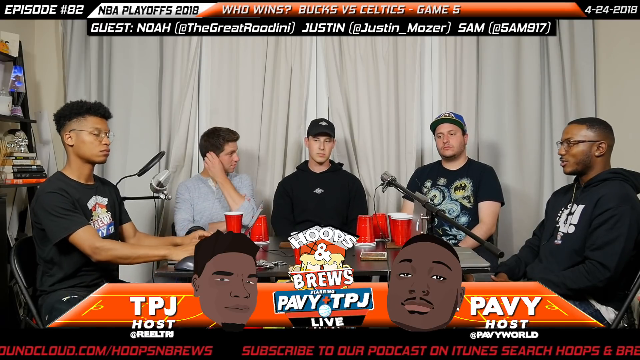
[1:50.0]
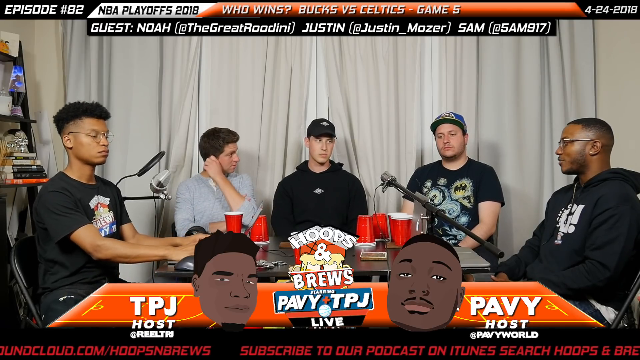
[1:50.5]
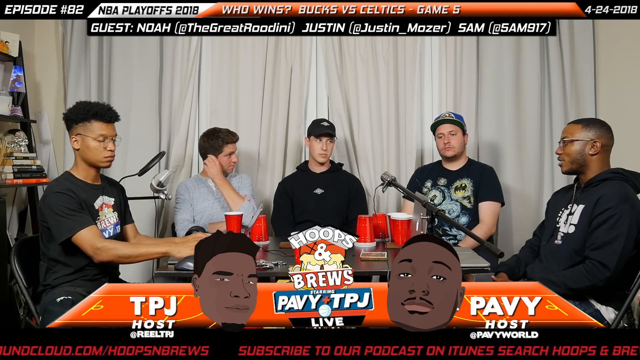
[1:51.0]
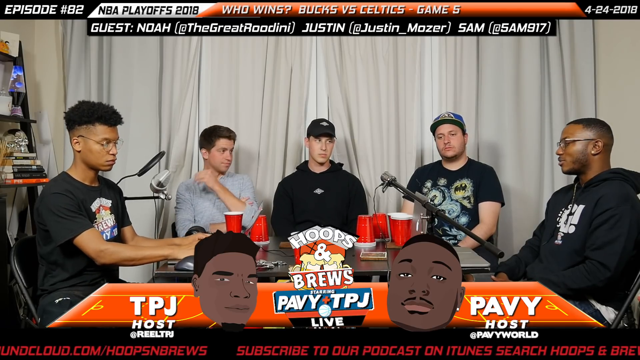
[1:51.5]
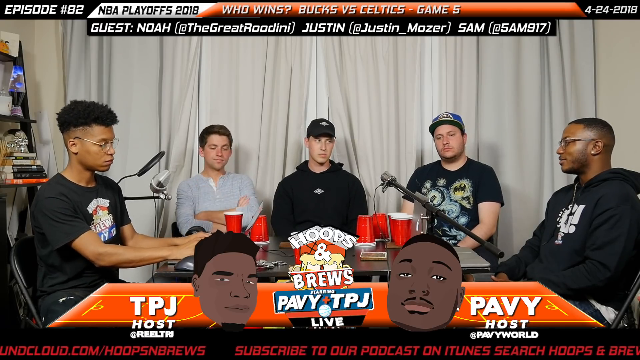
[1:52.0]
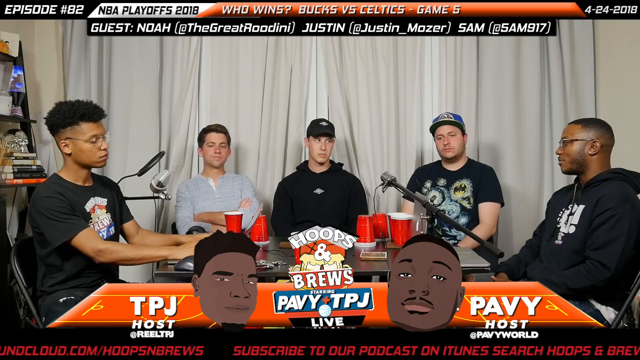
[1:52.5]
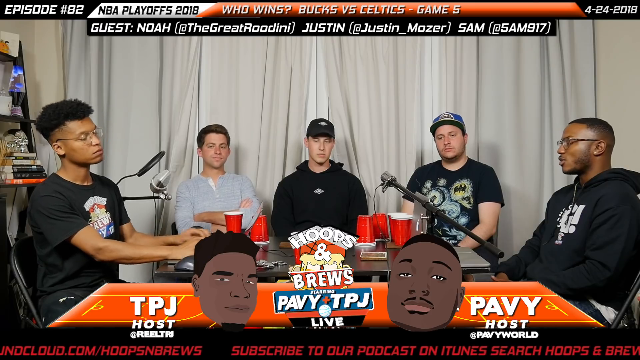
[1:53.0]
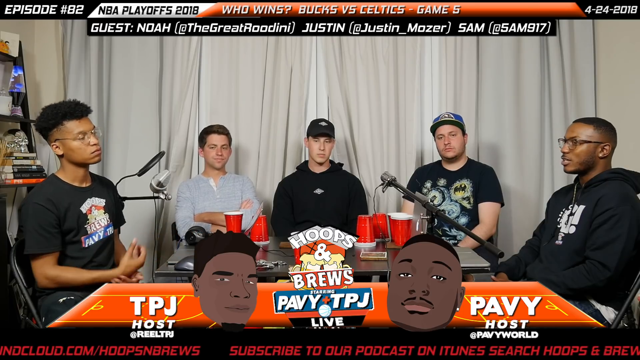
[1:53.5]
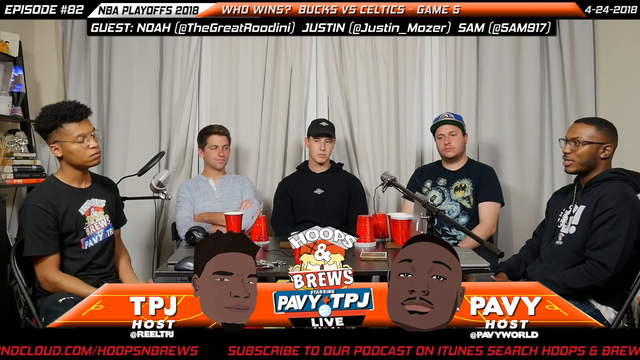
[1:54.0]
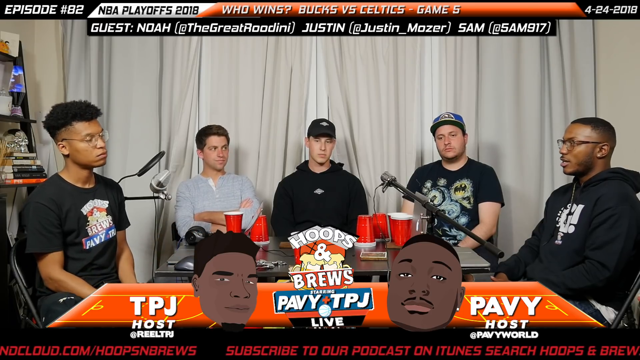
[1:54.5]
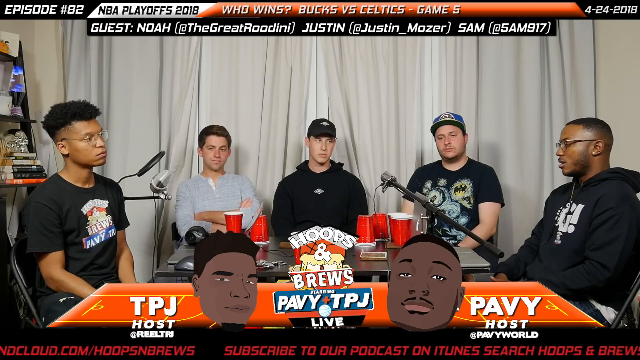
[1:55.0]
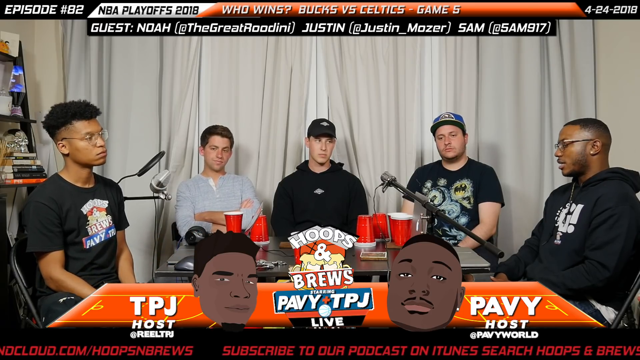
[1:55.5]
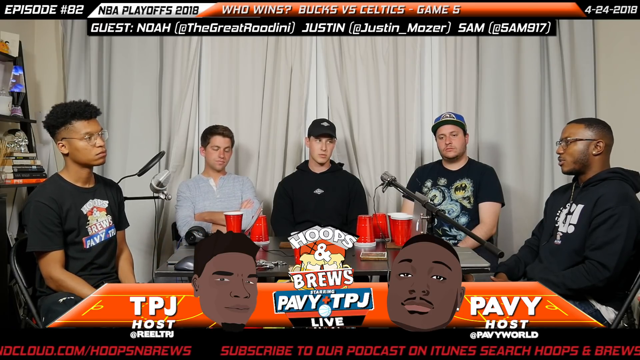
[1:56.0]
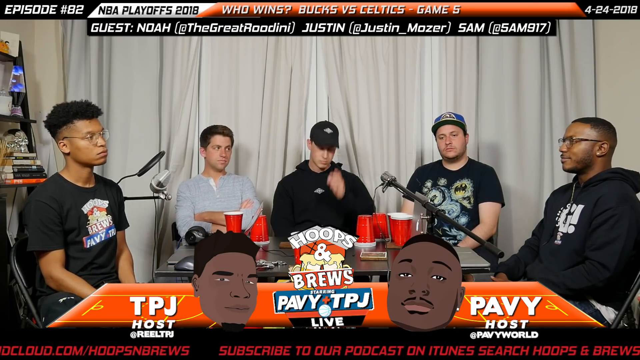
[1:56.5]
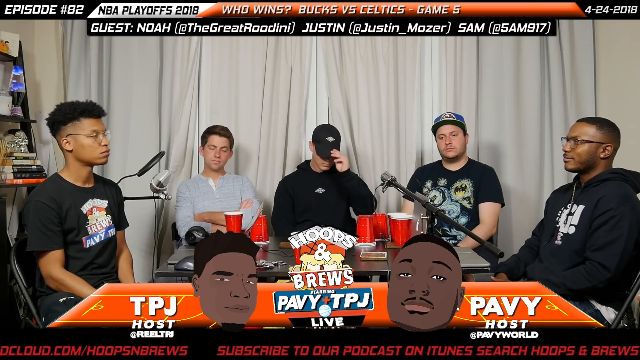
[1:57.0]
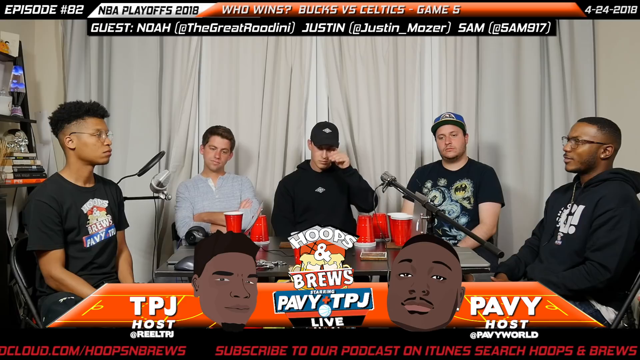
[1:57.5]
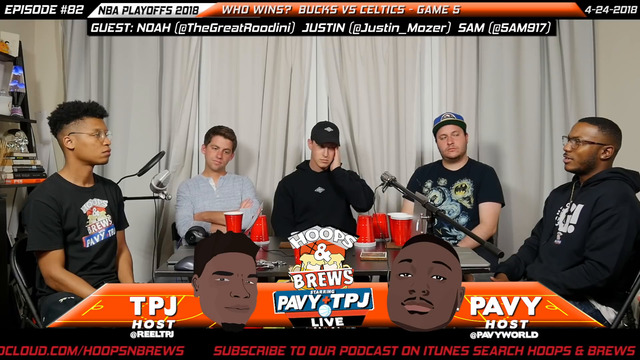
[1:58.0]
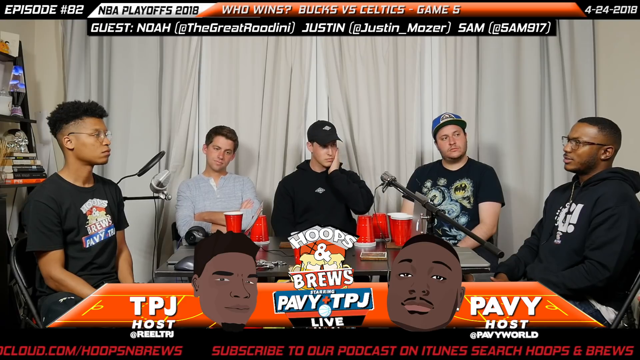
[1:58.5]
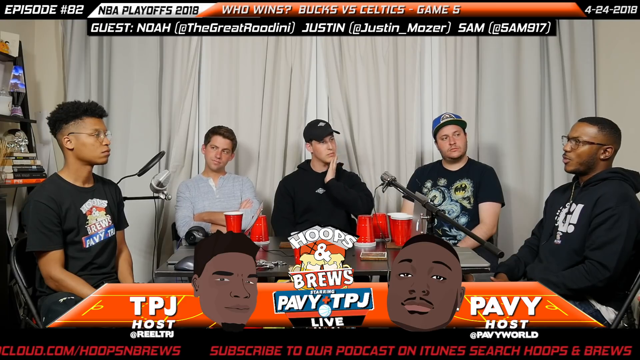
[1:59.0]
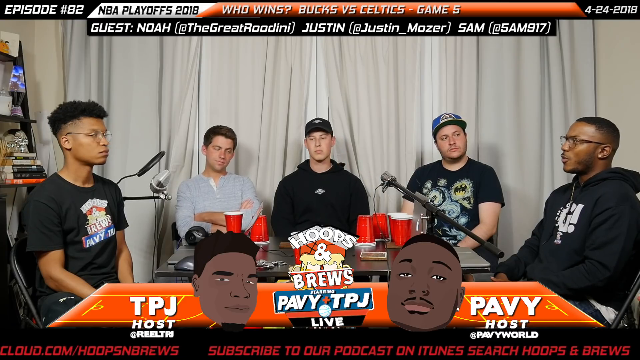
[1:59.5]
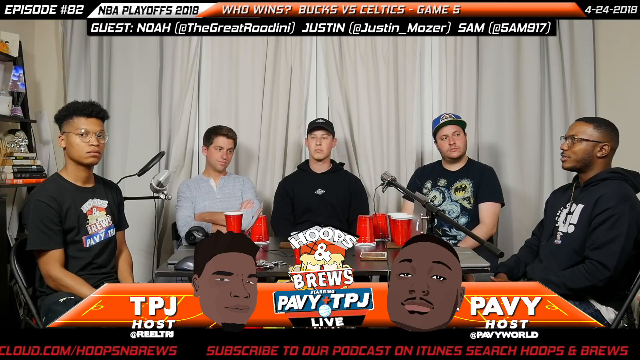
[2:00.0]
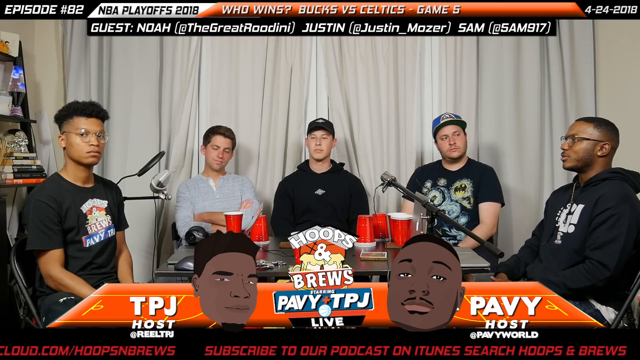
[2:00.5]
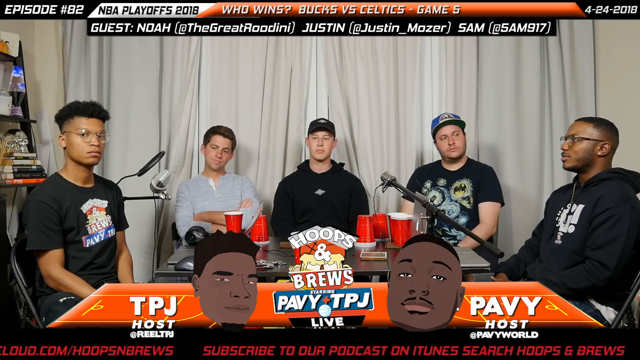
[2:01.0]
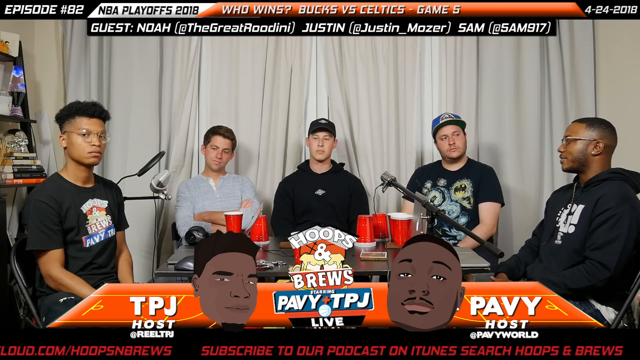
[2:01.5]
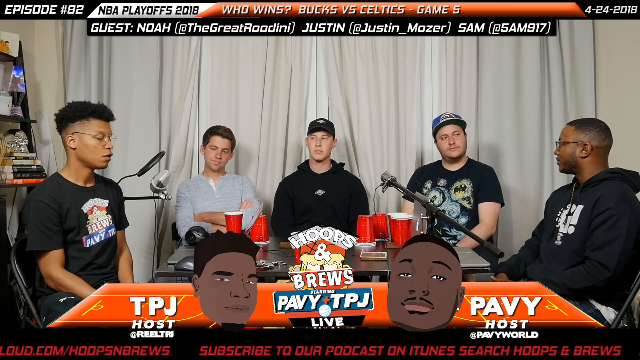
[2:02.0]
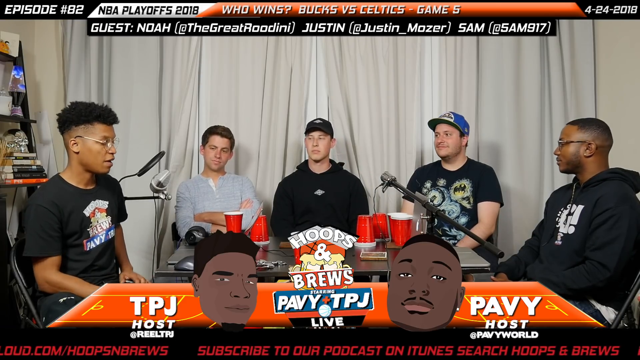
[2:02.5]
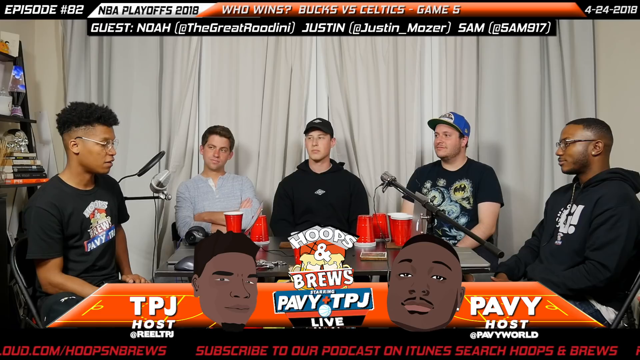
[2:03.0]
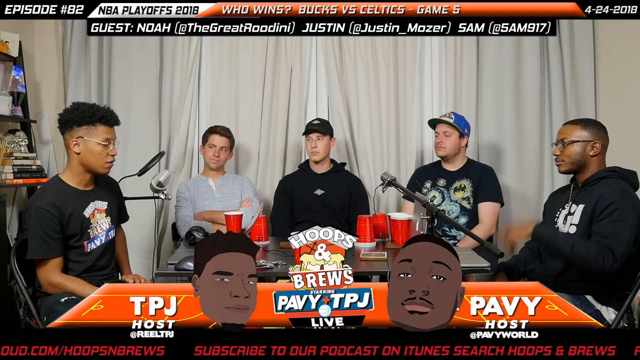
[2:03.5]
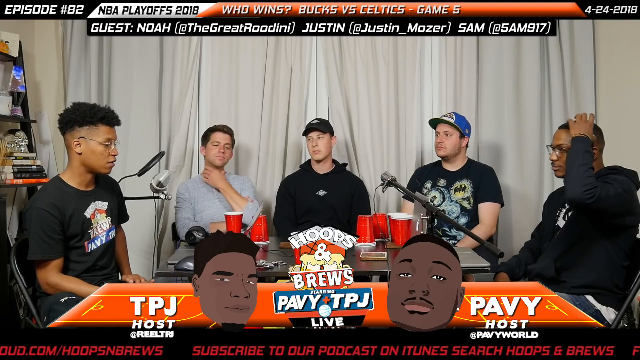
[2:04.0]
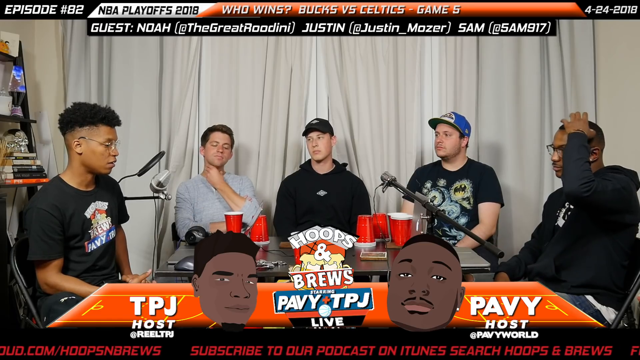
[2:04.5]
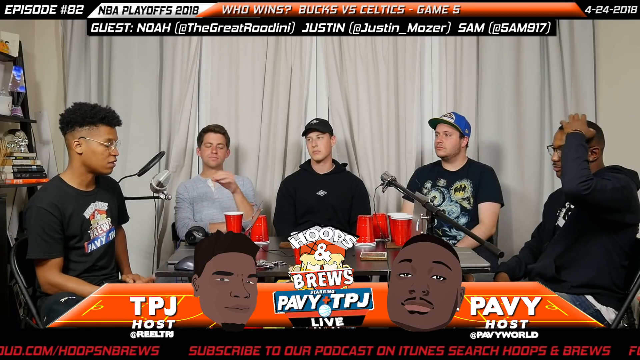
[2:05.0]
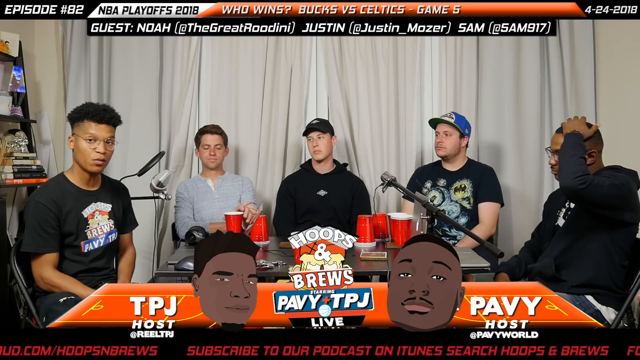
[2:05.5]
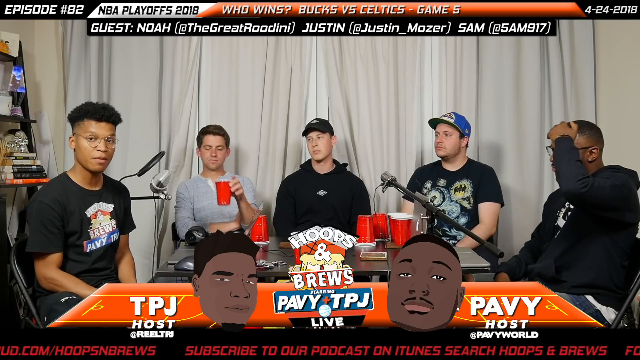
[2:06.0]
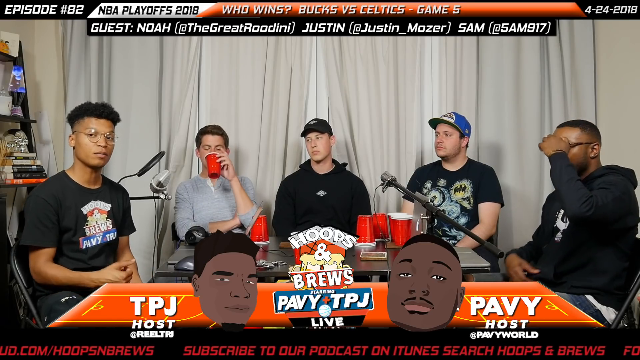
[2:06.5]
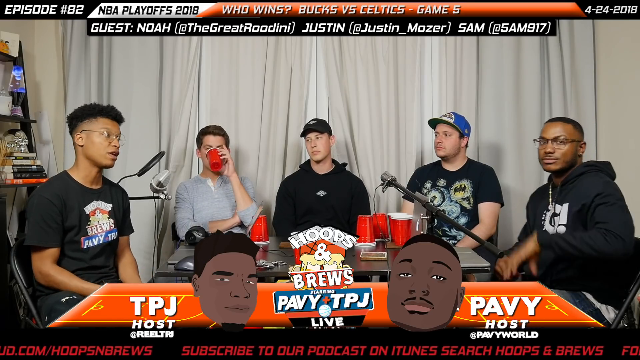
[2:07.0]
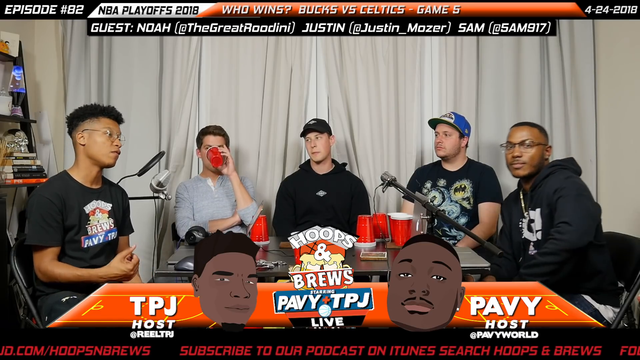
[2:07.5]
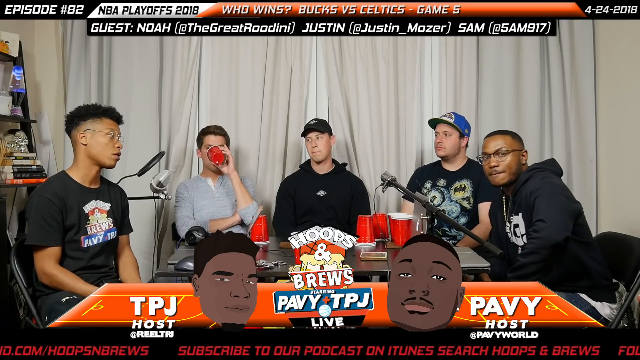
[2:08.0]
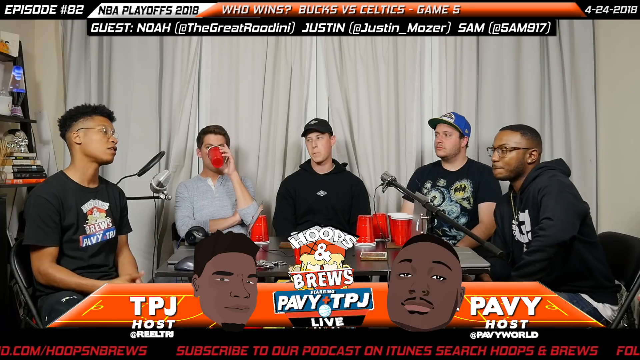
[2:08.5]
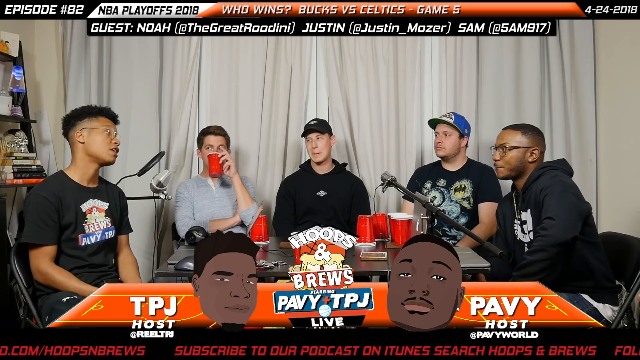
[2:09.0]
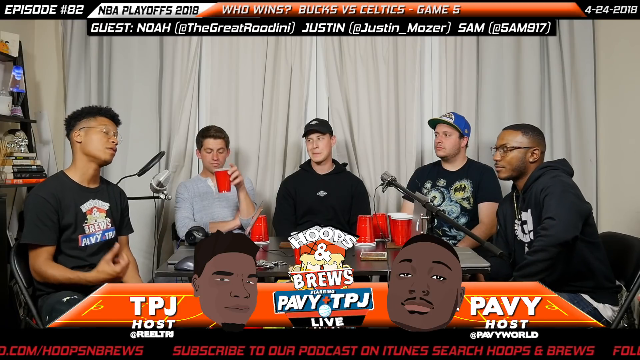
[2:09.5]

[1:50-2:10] A slider for contacting the people is at the bottom of the screen. Two large embedded images appear. The people talk with each other without moving.